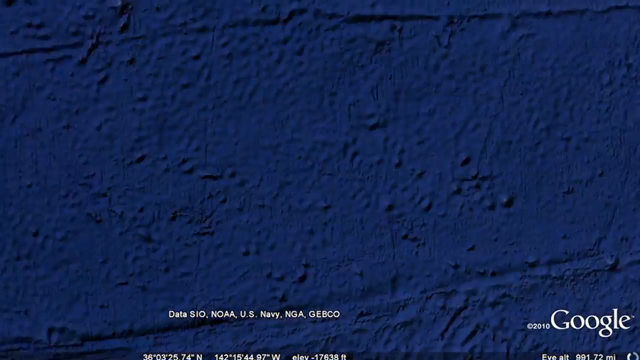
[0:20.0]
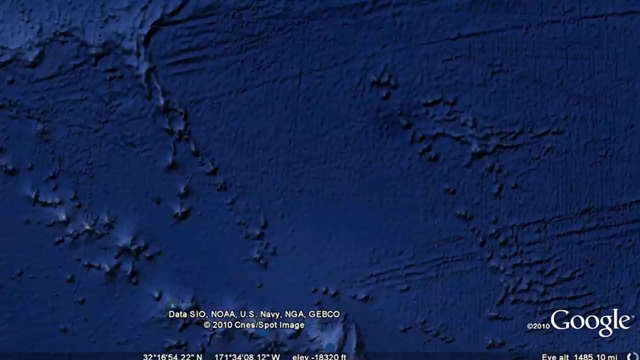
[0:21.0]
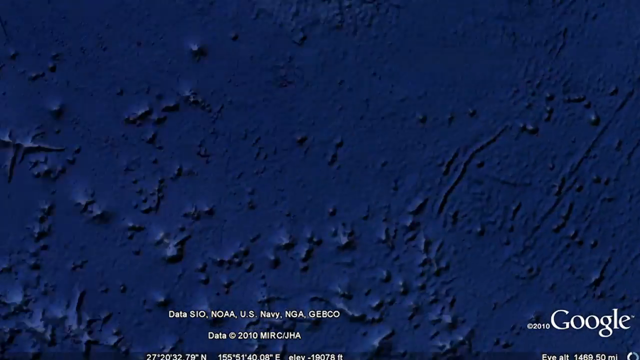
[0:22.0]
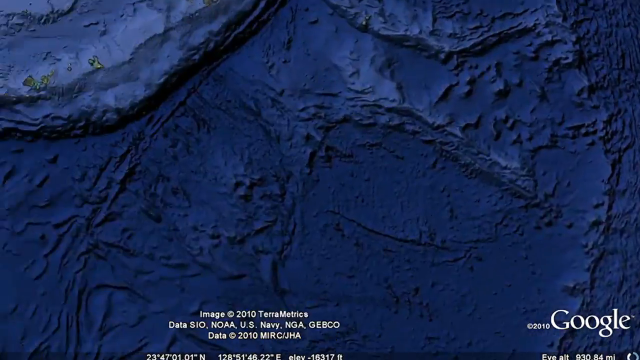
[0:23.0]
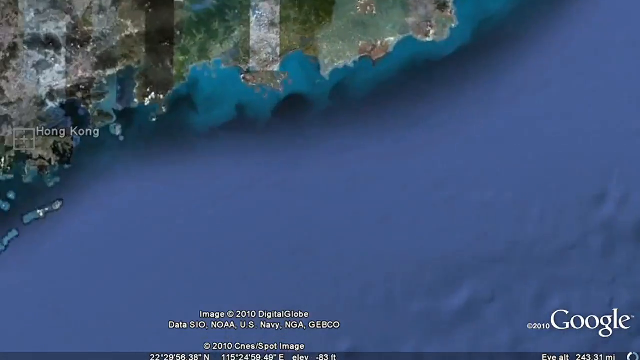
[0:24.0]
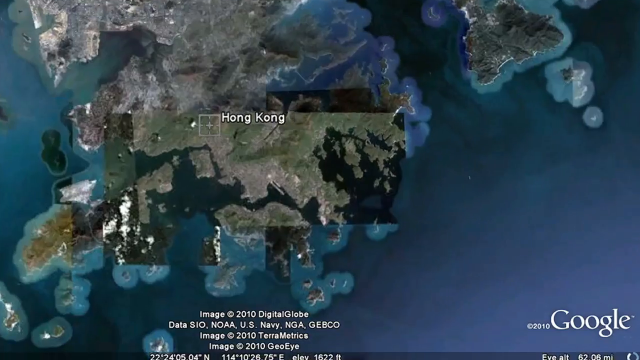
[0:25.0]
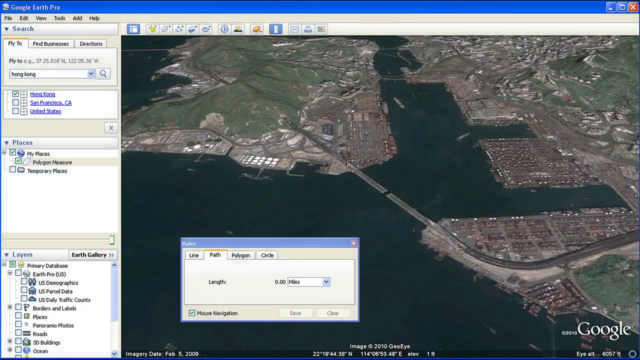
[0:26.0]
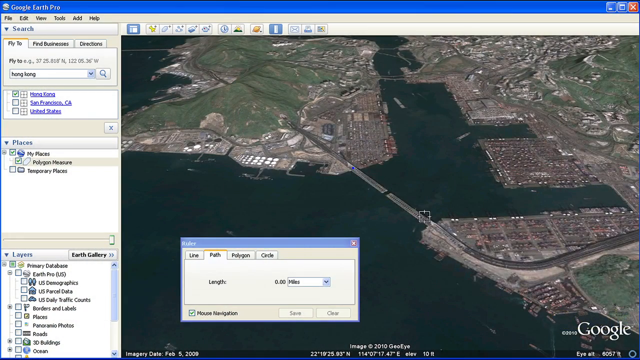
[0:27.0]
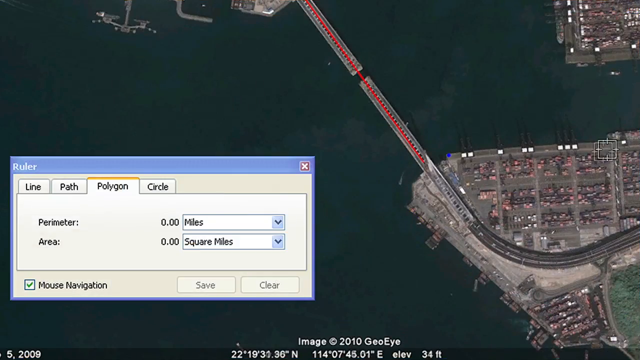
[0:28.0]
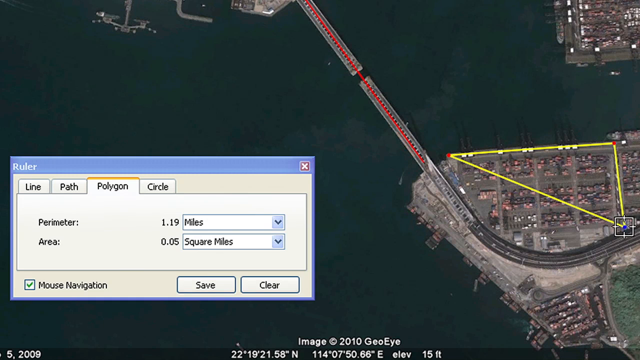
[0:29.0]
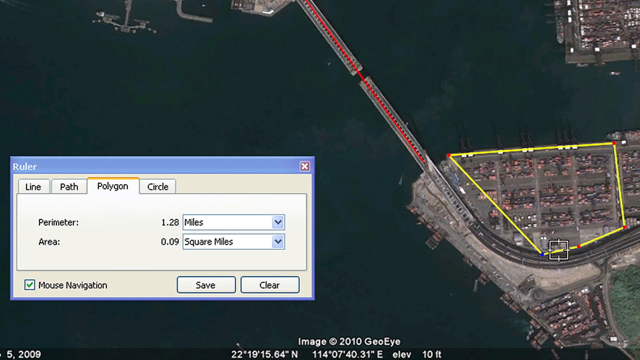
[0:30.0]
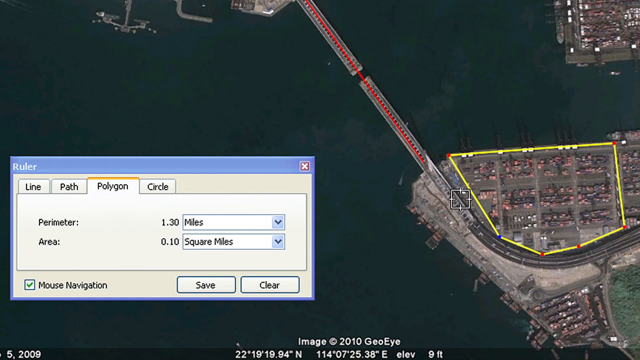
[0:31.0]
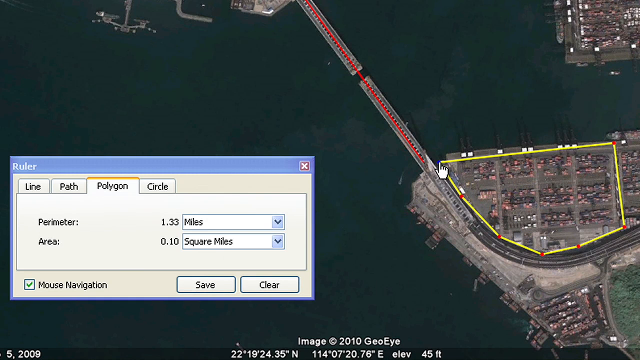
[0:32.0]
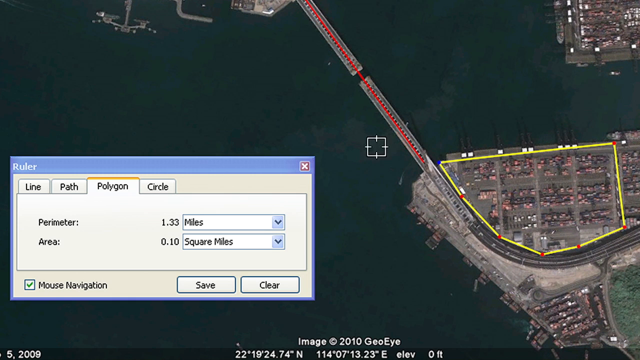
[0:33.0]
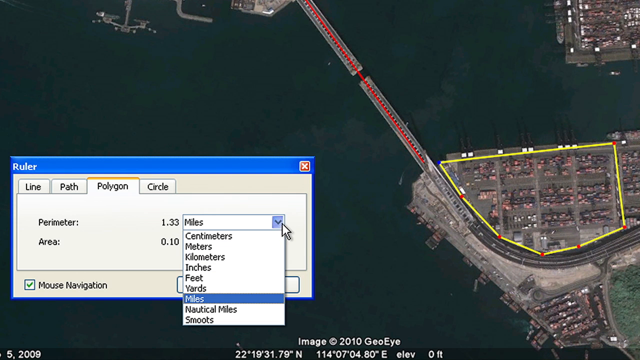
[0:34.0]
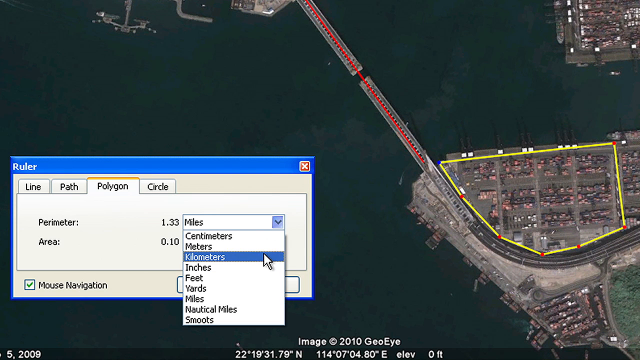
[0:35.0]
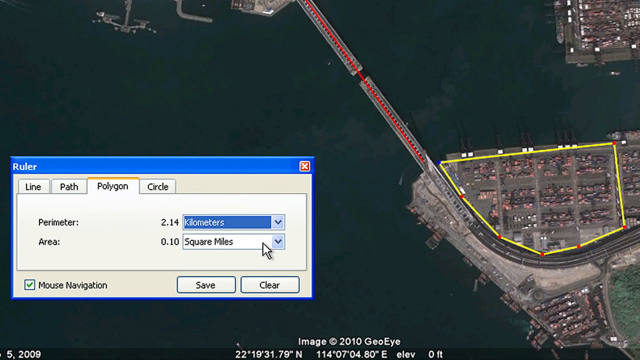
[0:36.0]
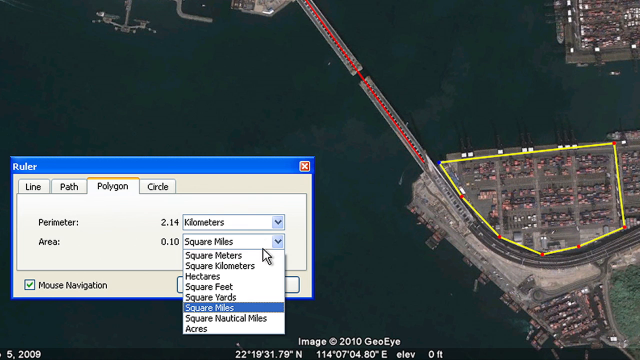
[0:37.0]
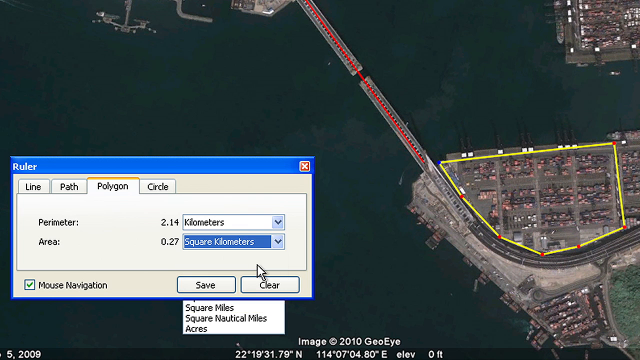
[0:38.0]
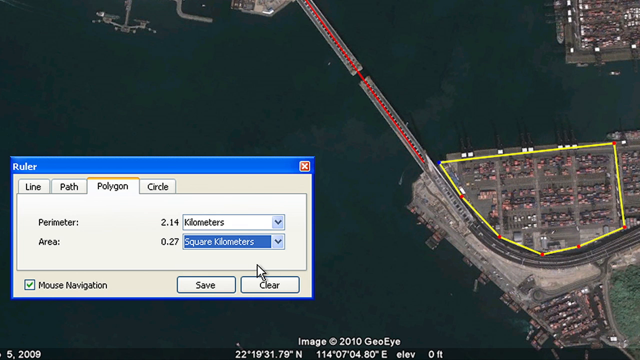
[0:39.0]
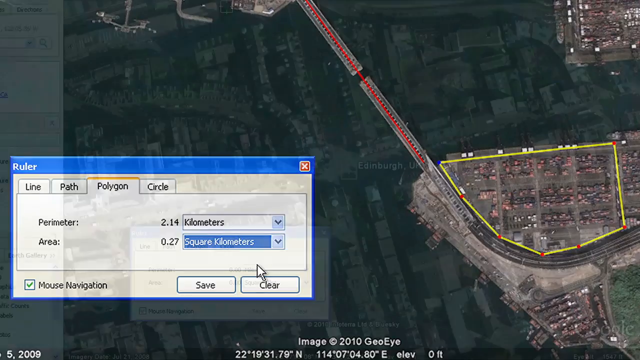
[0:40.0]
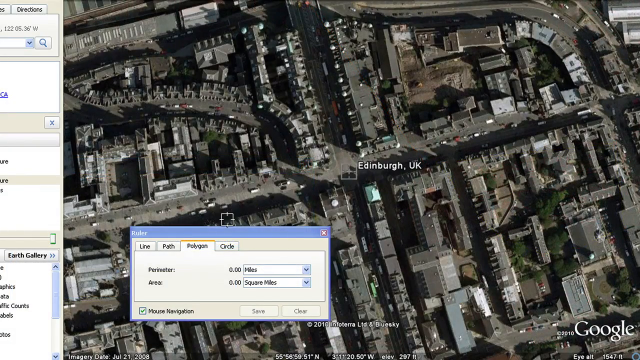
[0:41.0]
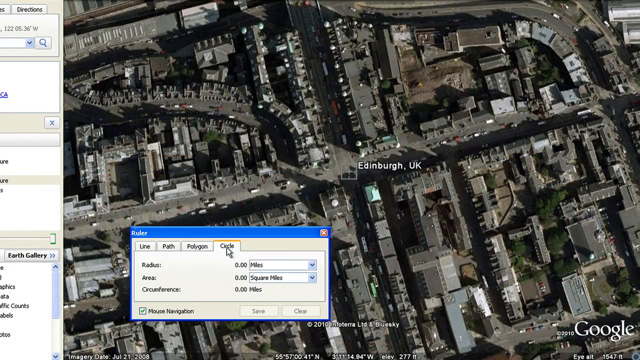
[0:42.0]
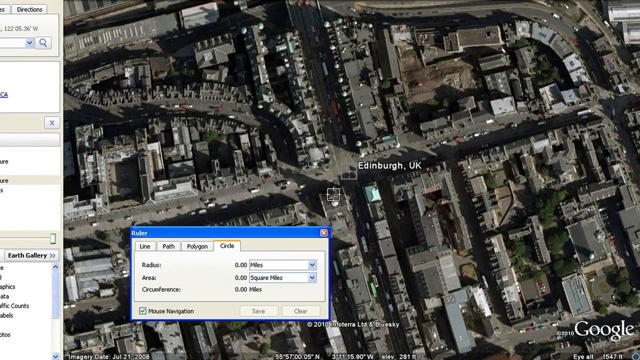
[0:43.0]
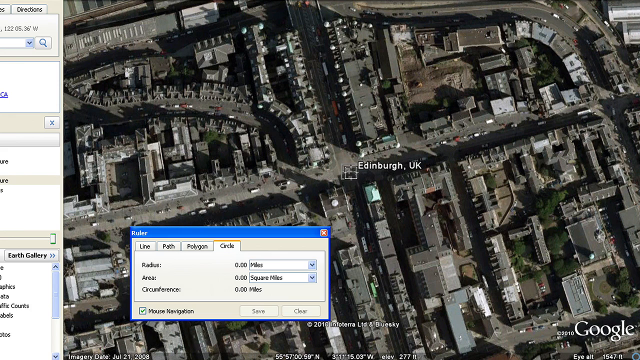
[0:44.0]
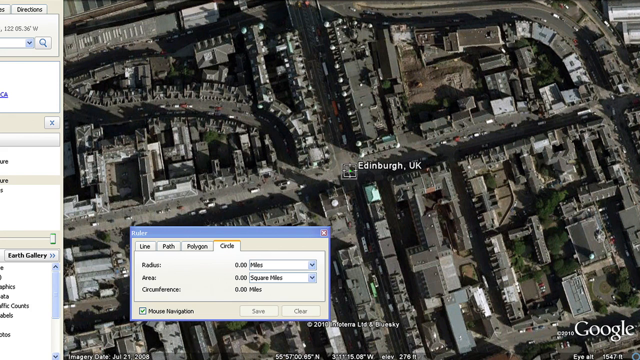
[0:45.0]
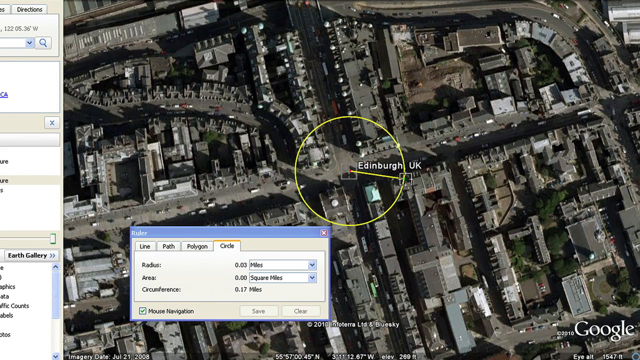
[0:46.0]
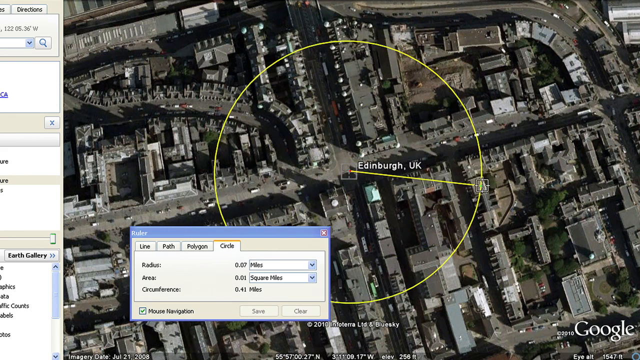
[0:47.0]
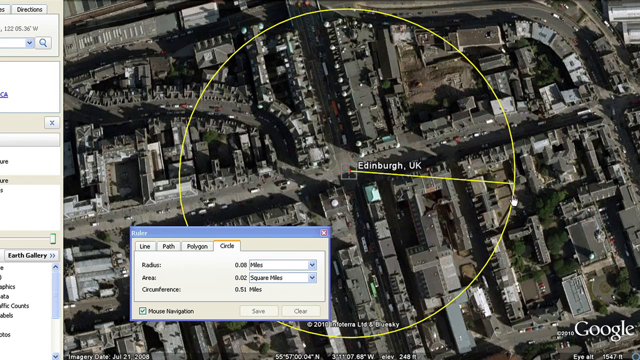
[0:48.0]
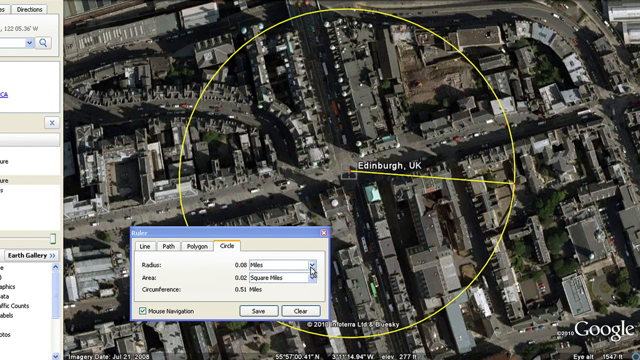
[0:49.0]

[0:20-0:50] An overhead view of the ocean appears in Google Earth, and the Earth looks like it is spinning until the view reaches an area in Hong Kong. The Ruler dialog appears again with the Path tab chosen, and two points are dragged onto a bridge in the Google Earth view. Next, the Ruler dialog is on the Polygon tab, and a polygon is drawn in an area near the path created on the map. More dot points are added to create a specific shape, and the values in the Polygon tab update dynamically as the points are added. The perimeter measurement type is changed to kilometers and the area to square kilometers, giving 2.14 kilometers in perimeter and 0.27 square kilometers in area. The view then shows Edinburgh, UK, and the Ruler dialog is switched to the Circle tab. A point on the map is clicked and dragged outward to the right, dynamically creating a yellow circle, with a line from the middle to the right representing the radius. The radius measurement type is then being changed.